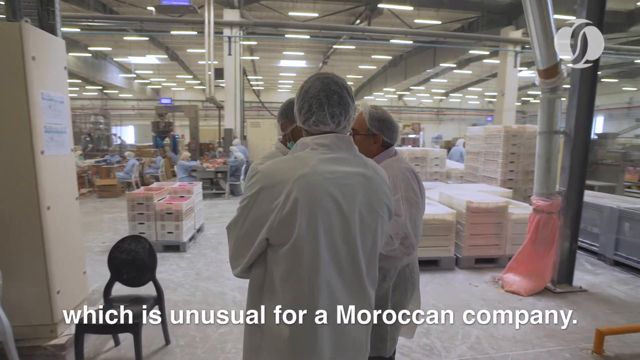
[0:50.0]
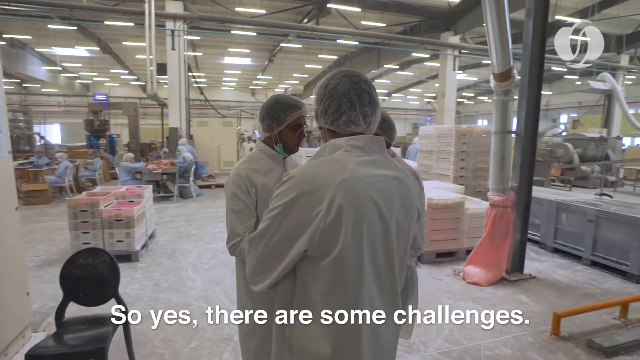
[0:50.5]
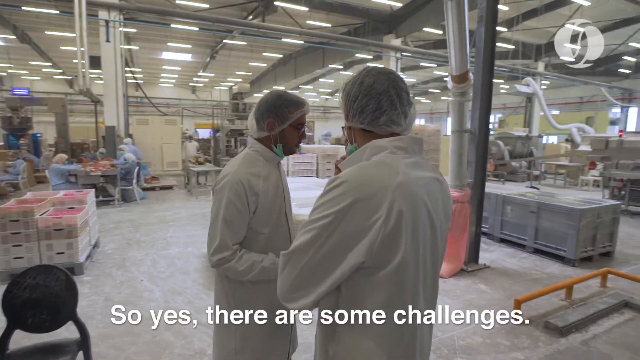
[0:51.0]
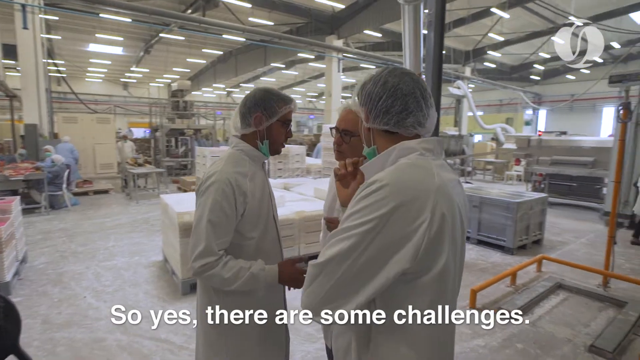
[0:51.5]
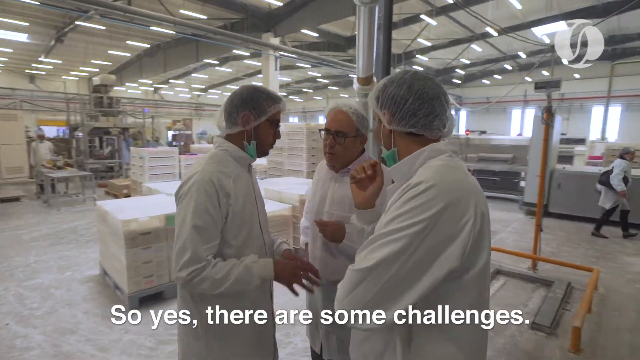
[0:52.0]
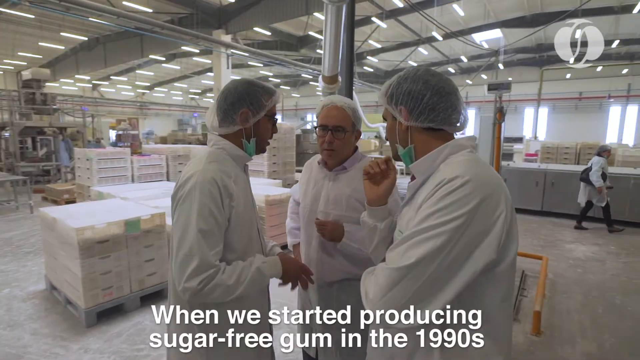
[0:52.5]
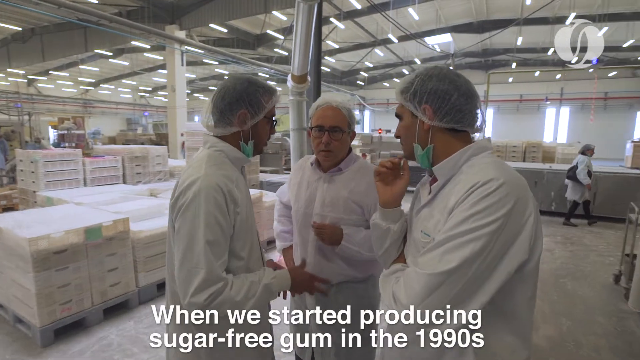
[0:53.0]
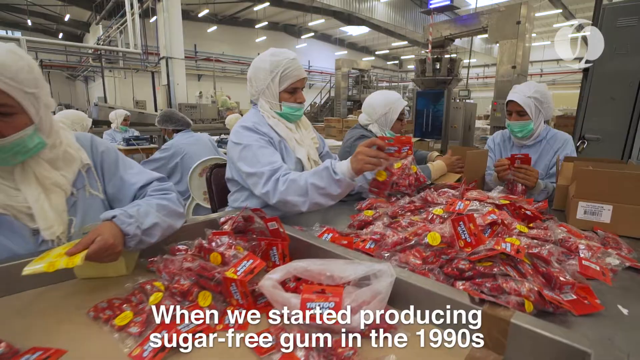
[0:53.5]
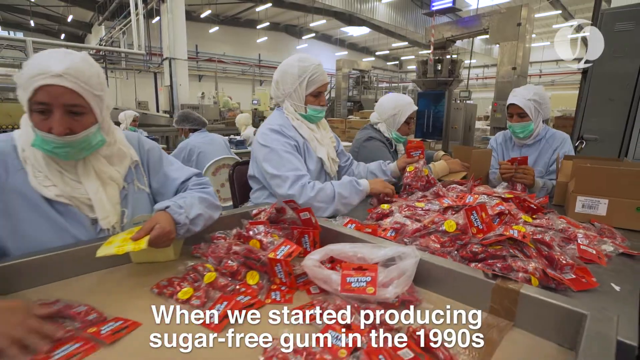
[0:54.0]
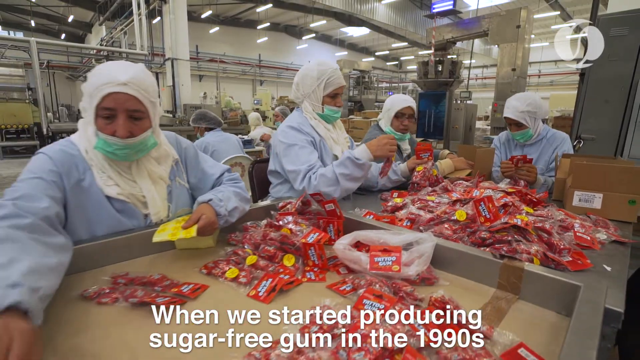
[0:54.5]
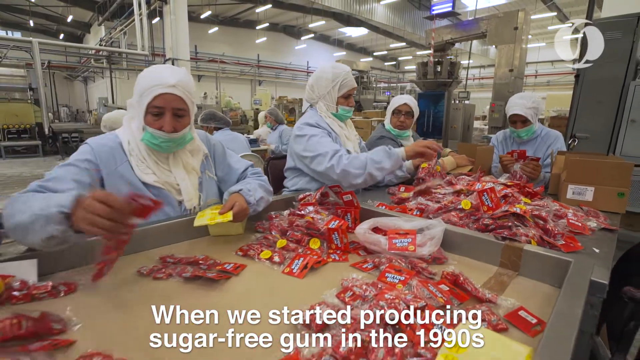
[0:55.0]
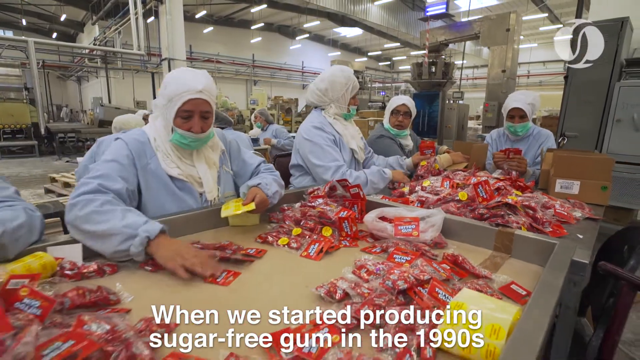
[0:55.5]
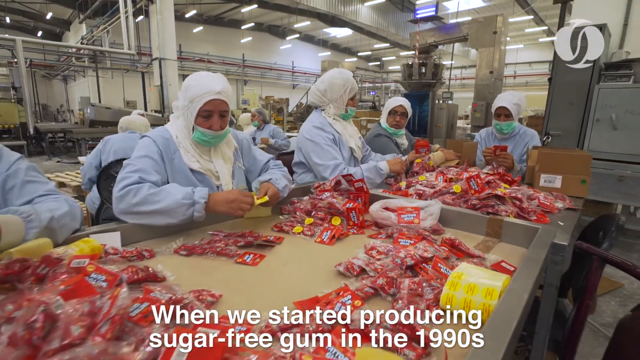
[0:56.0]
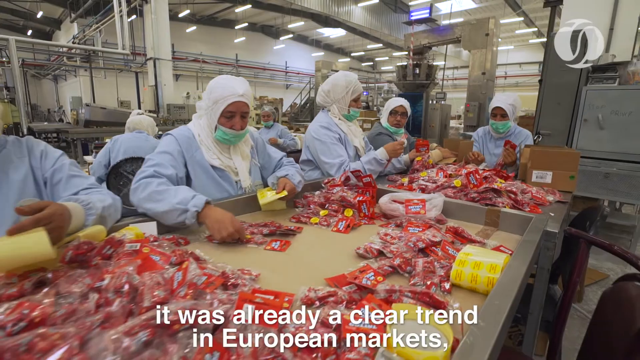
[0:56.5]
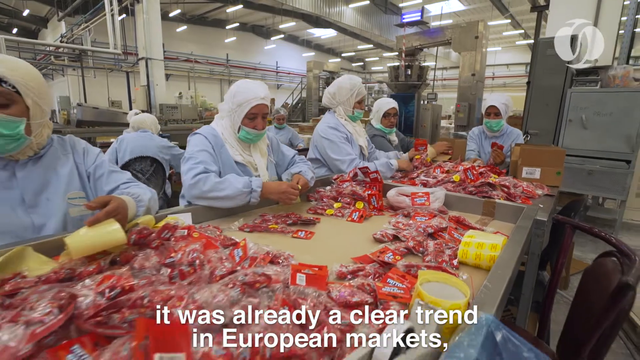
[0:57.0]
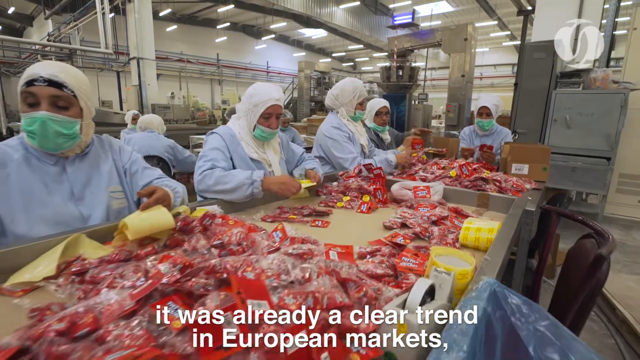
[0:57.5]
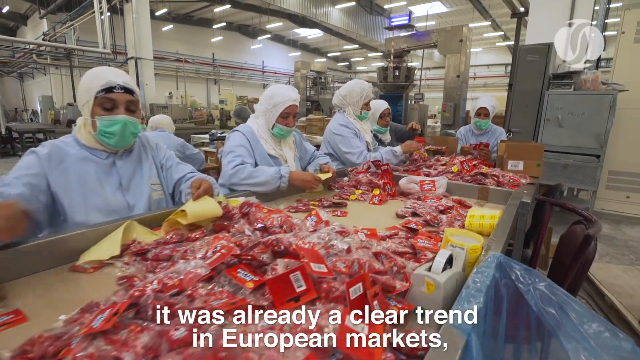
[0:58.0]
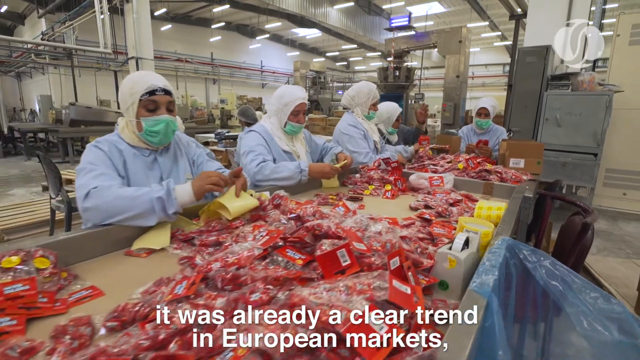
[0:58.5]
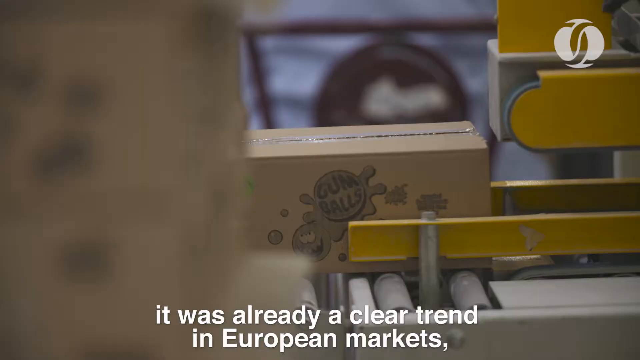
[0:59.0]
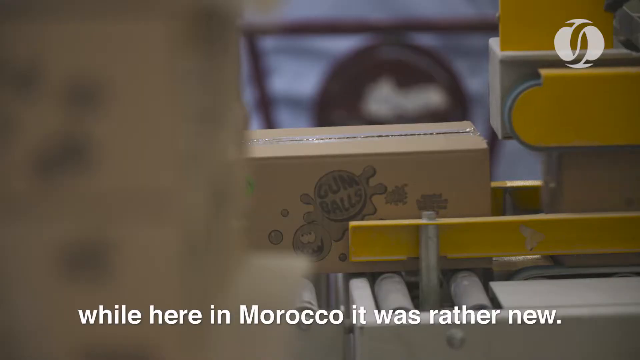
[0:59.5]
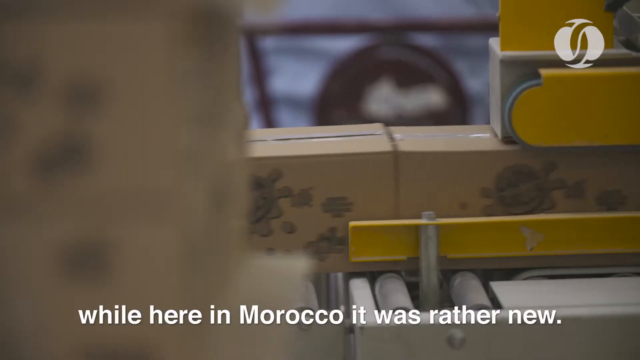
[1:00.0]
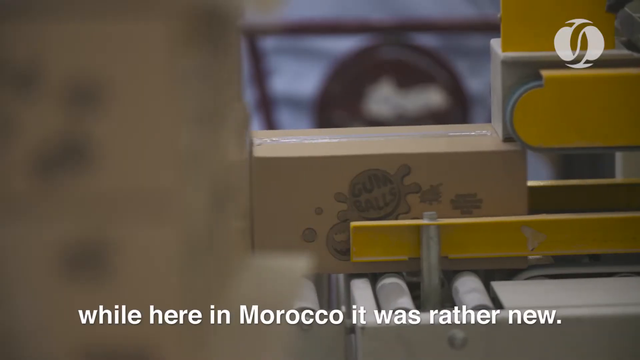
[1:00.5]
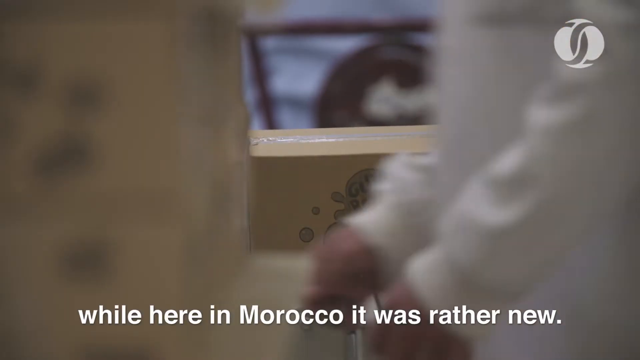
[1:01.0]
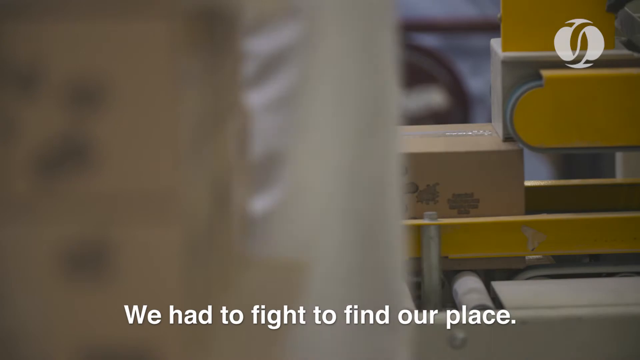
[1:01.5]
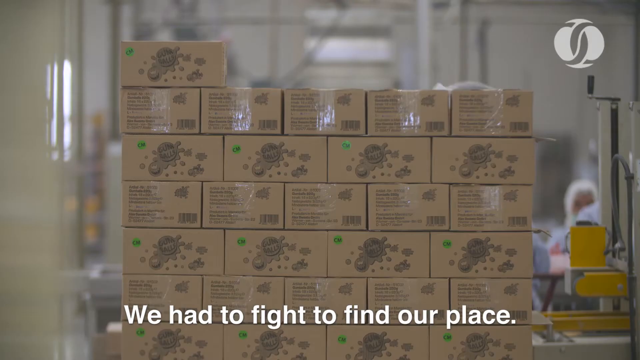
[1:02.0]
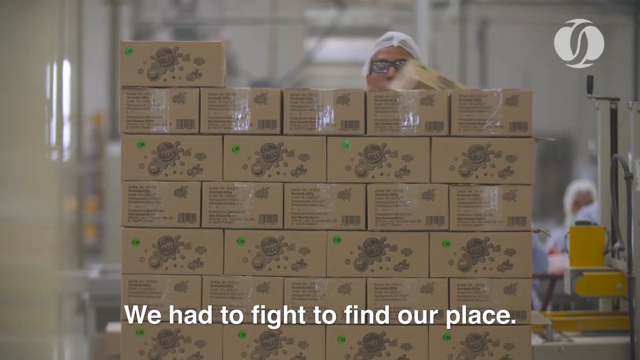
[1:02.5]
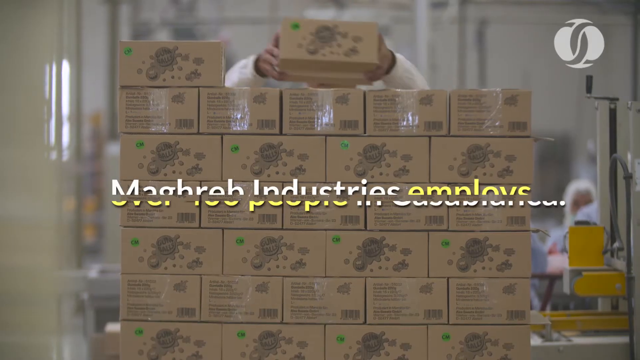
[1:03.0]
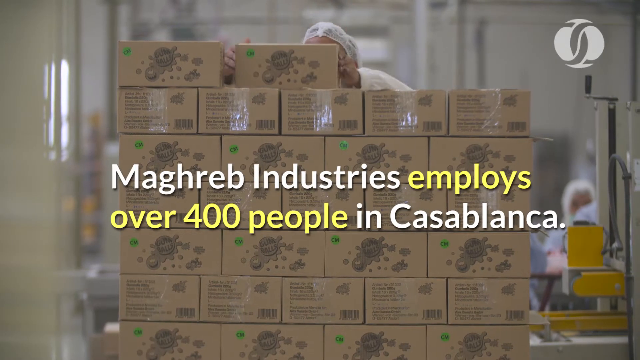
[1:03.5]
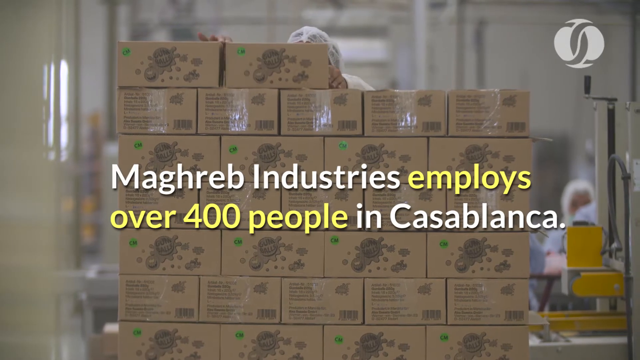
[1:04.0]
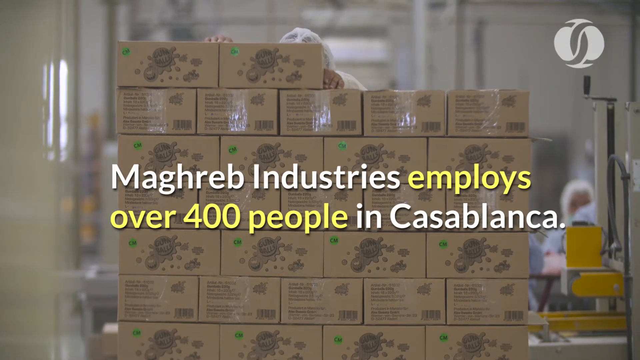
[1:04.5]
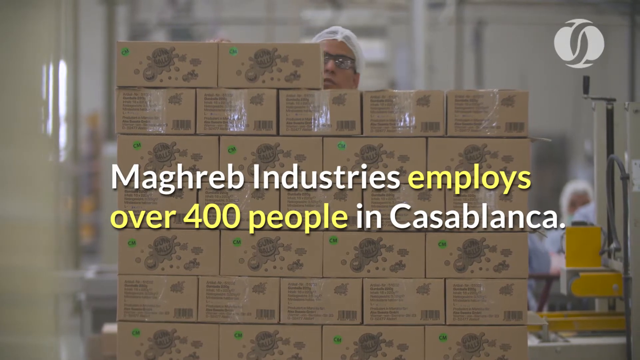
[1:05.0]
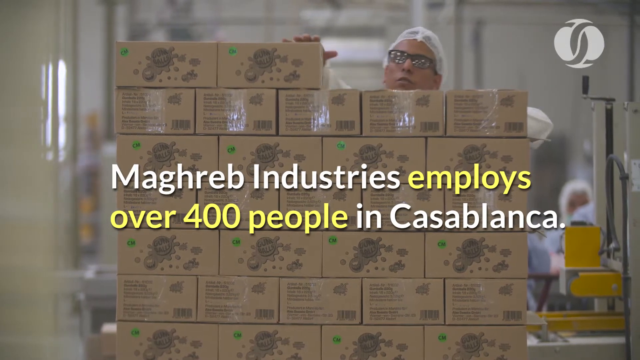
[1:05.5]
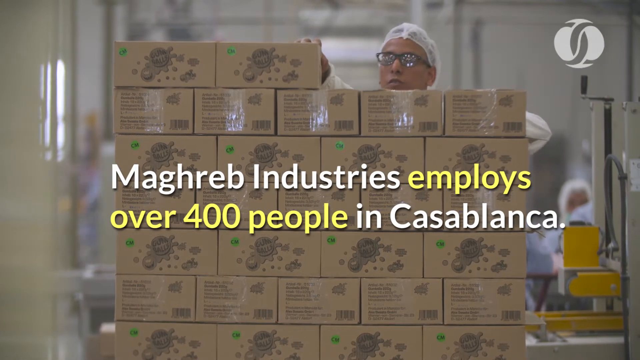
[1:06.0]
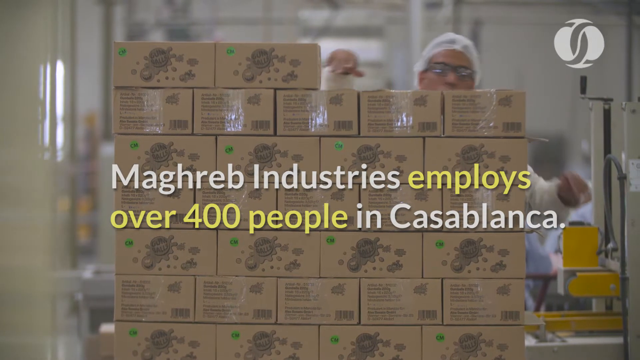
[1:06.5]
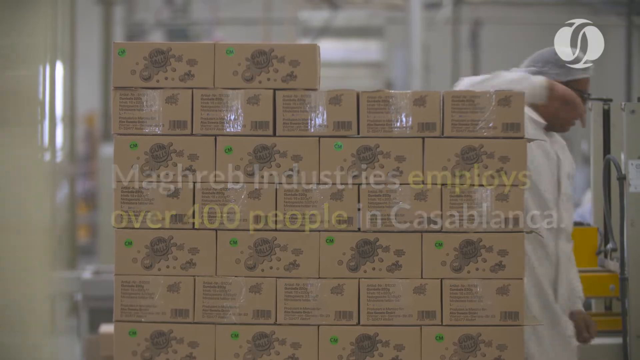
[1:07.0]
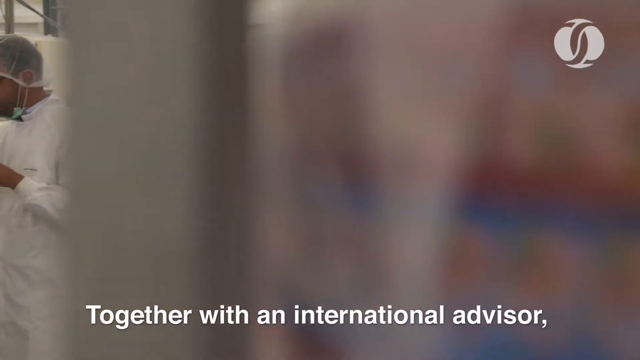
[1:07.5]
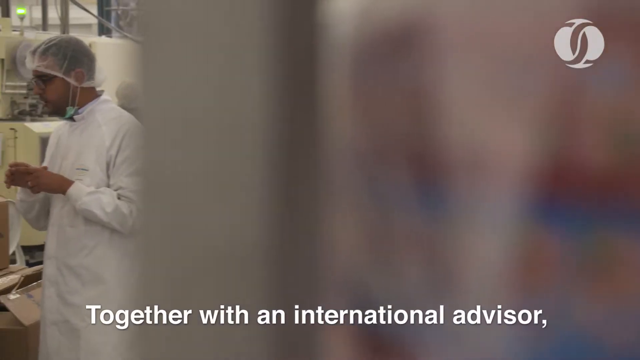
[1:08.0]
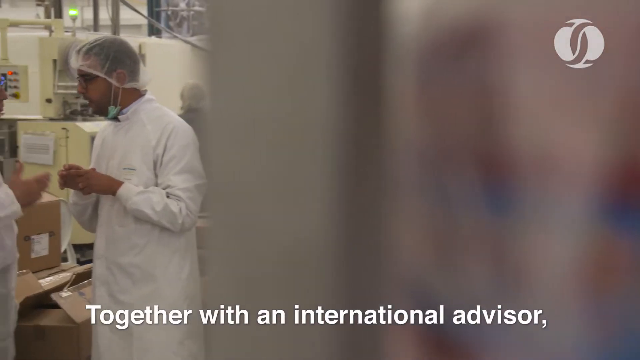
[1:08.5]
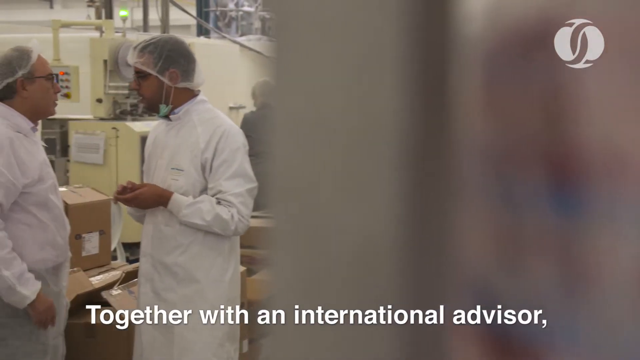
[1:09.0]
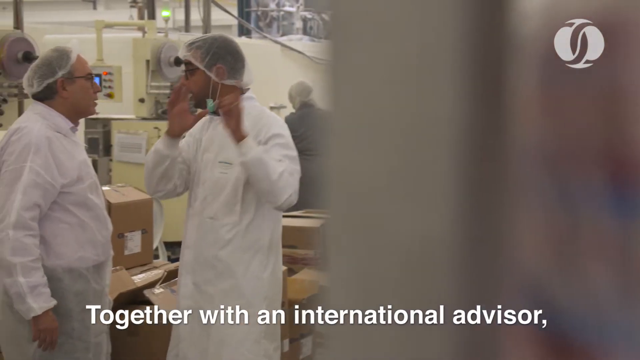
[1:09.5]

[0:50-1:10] A man in an all-white coat is standing in the factory, sort of just talking, with the colleagues he works with. There is a little black chair and some sort of pink net, and the gum-making area has lots of lights. Words written in white read: "So yes there are some challenges when we started producing sugar-free gum in the 1990s it was already clear trend in European markets while here in Morocco we had to fight to find our place."